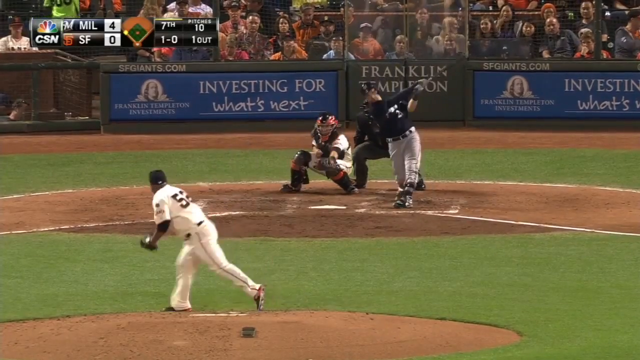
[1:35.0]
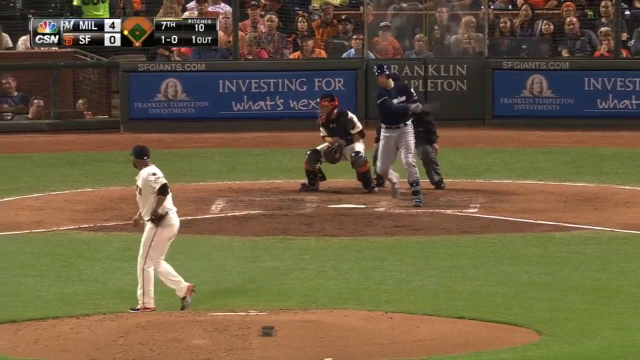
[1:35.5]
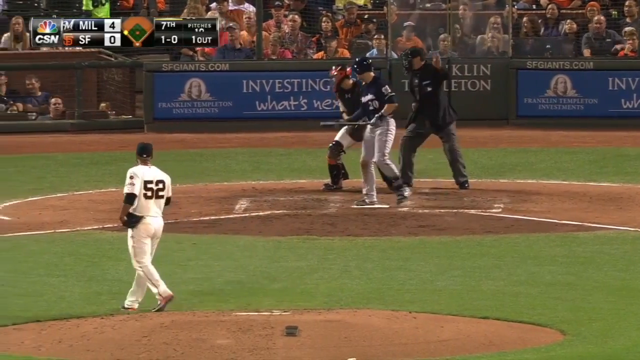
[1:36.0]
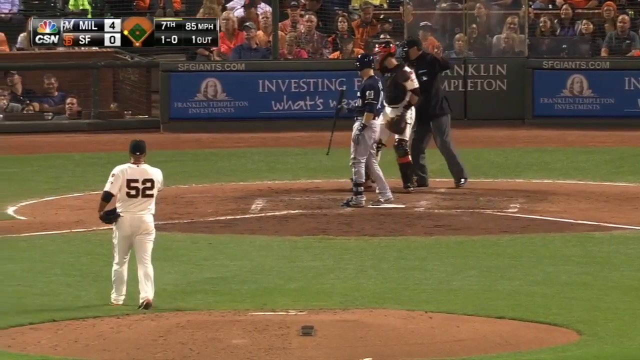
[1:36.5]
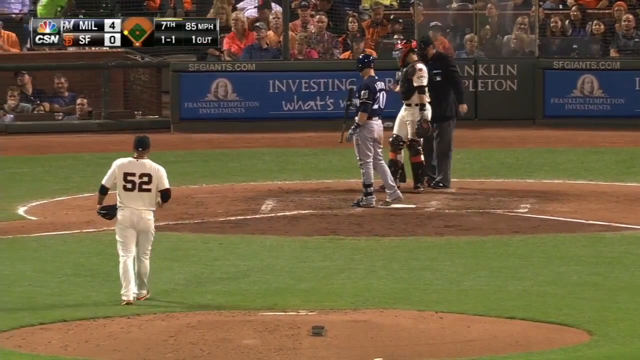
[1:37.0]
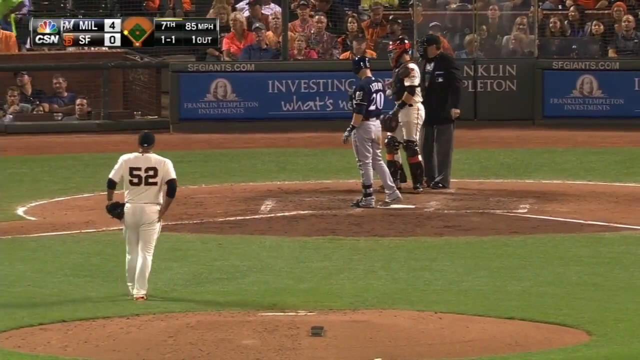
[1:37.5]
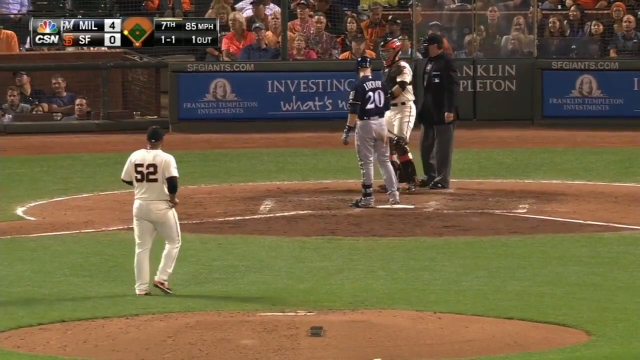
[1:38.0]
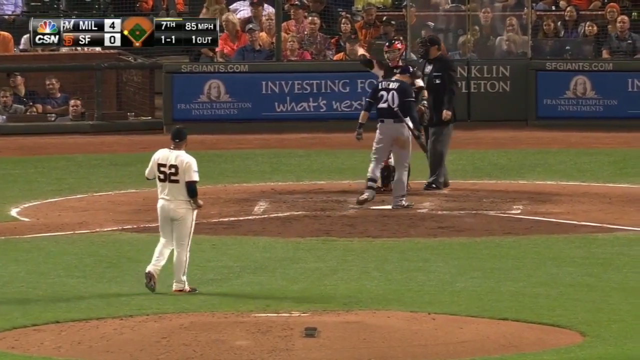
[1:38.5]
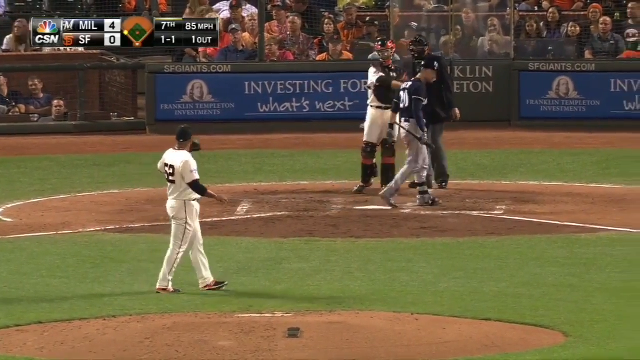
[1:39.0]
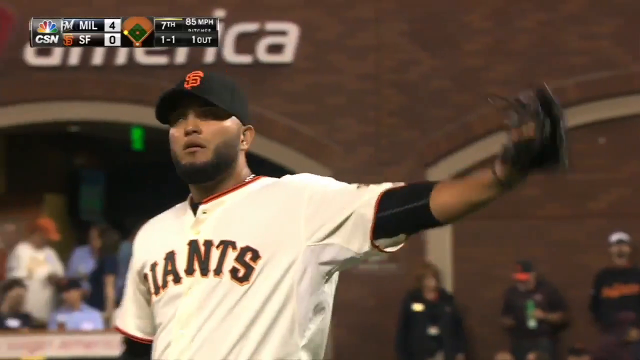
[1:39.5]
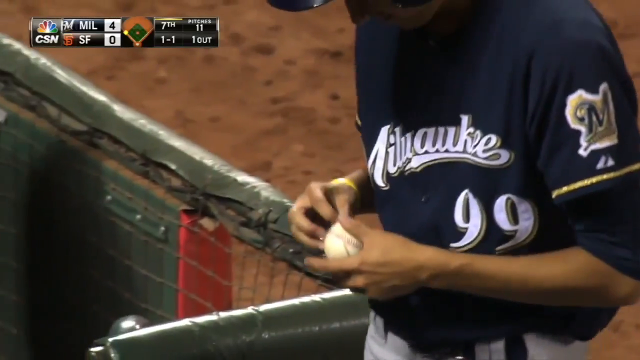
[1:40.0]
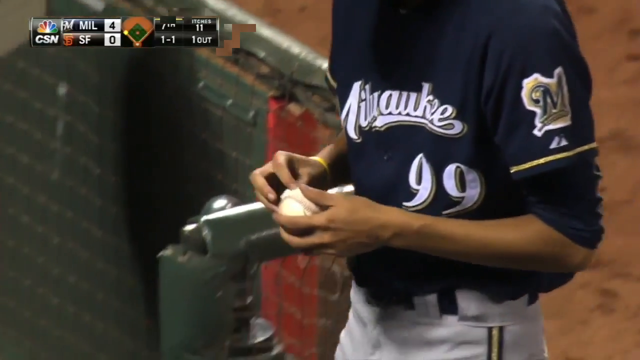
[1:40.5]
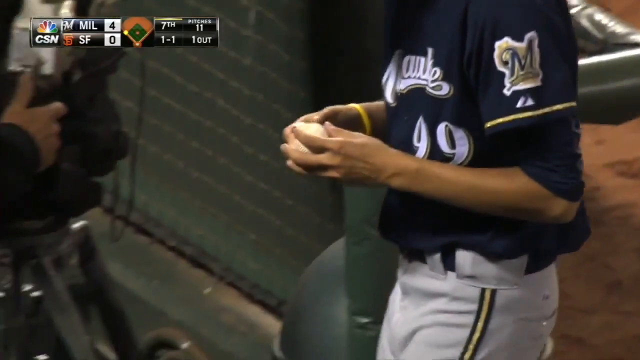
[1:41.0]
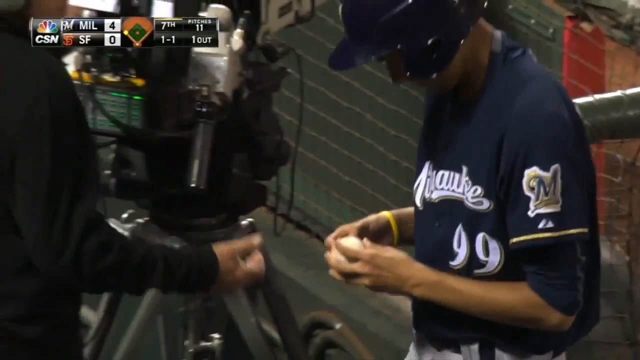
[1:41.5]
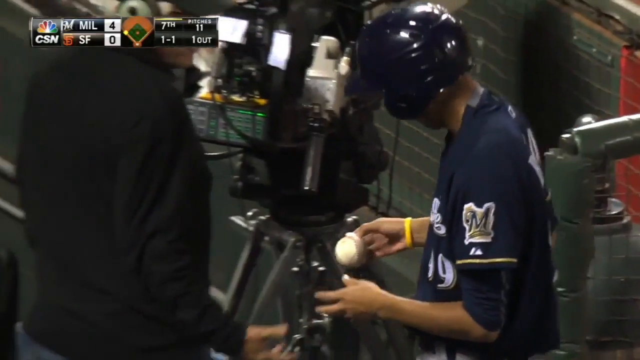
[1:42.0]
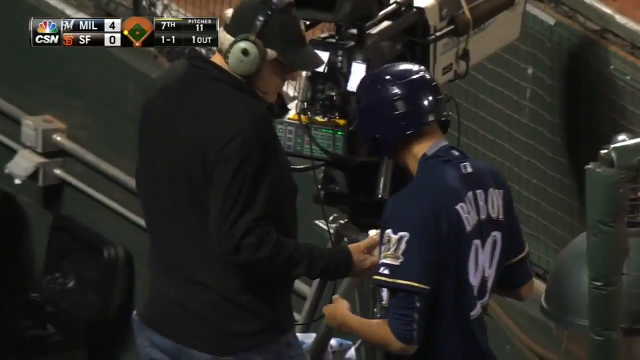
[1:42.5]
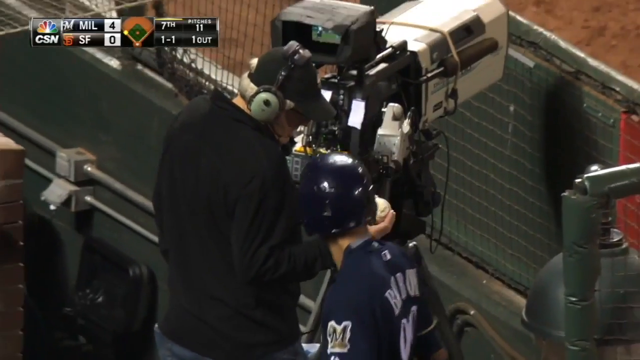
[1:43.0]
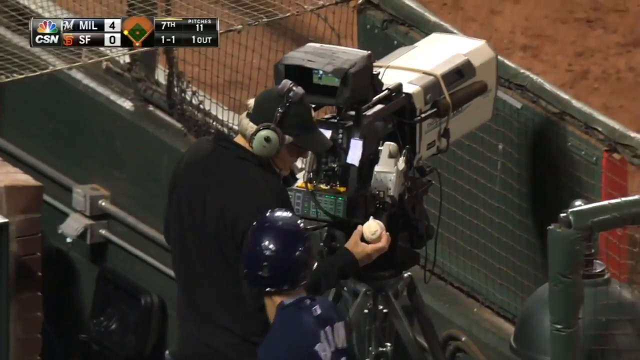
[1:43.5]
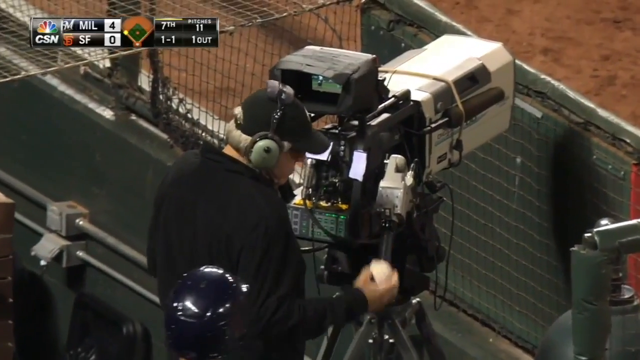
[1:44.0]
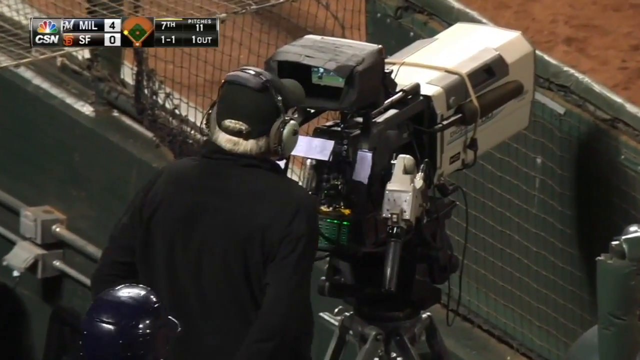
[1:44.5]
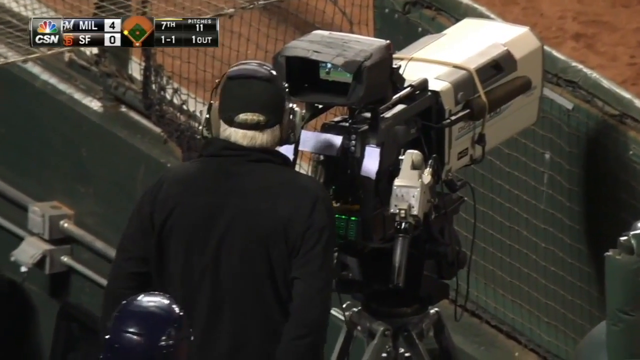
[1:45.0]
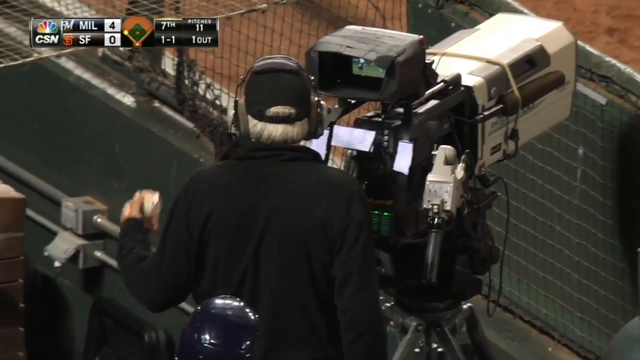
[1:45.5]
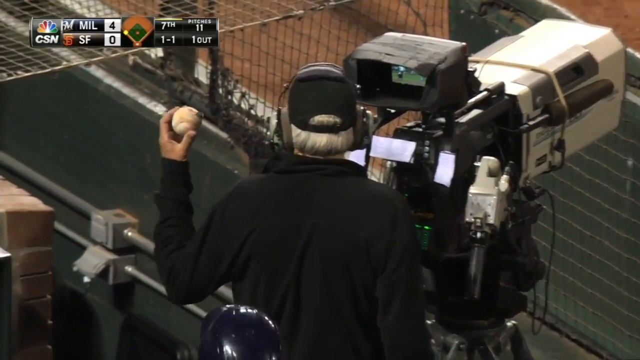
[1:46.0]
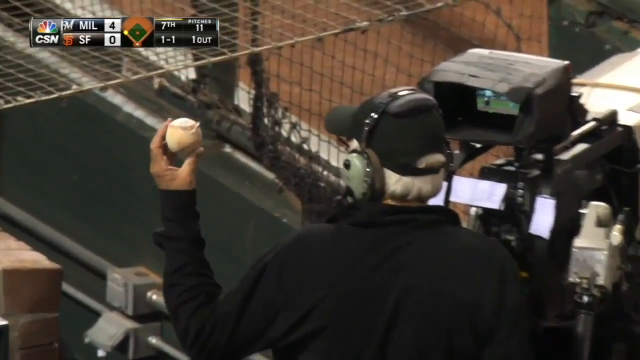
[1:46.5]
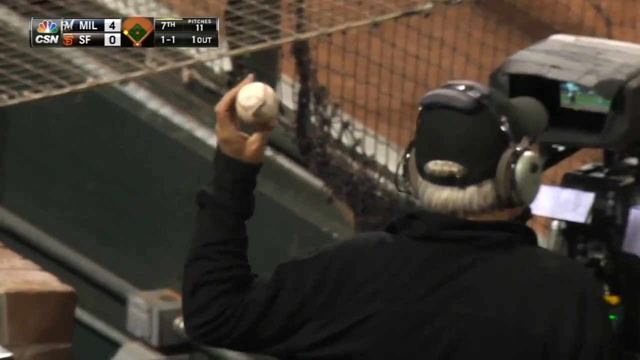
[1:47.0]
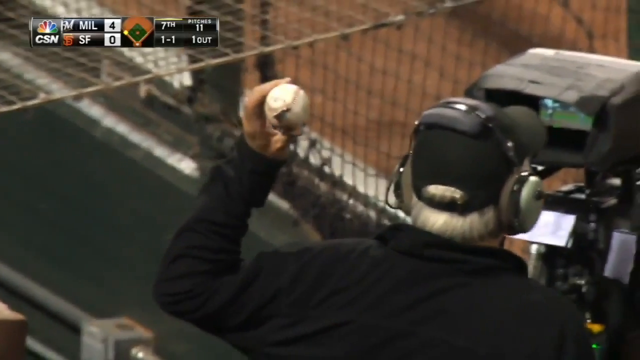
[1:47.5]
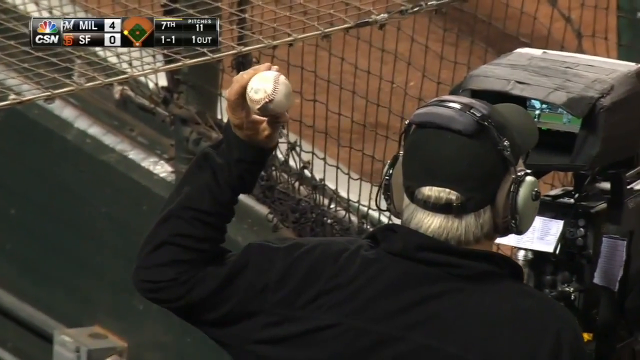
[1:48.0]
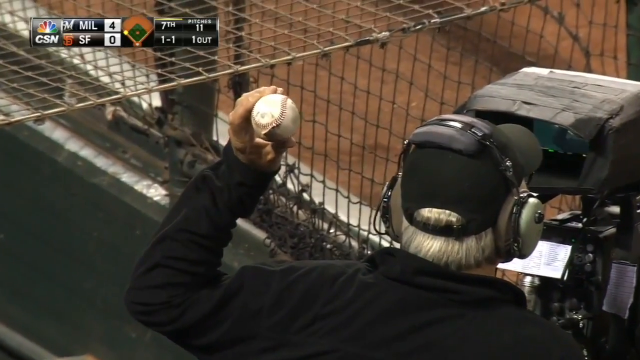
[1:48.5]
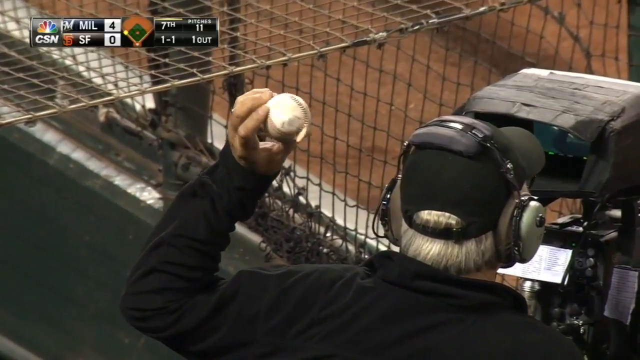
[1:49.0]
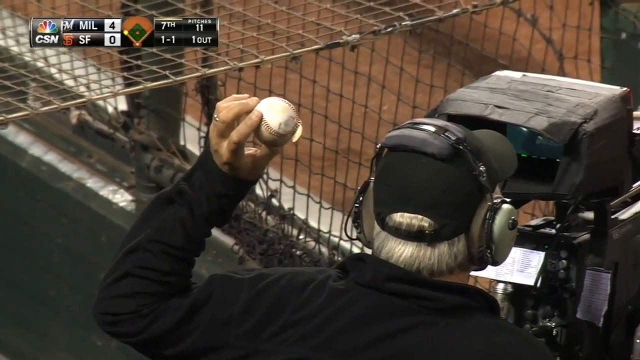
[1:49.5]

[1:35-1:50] The batter, in a blue uniform with white letters, hits the ball, and once again it has been ripped. A player hands the ball to a cameraman, who holds it up, looks at it and turns it back and forth, showing it to the people behind him. The pitcher gets another ball from the home plate umpire. A player walking the ball back into the dugout seems to play around with the broken part of the ball out of curiosity.